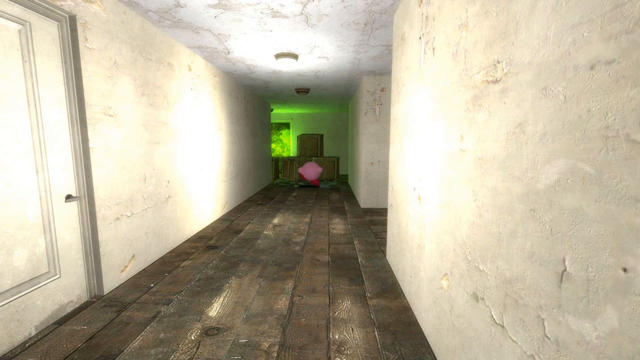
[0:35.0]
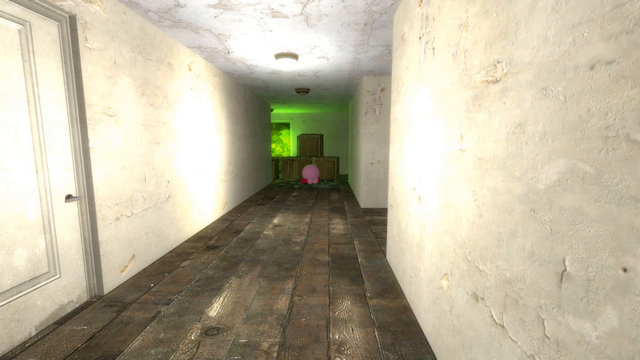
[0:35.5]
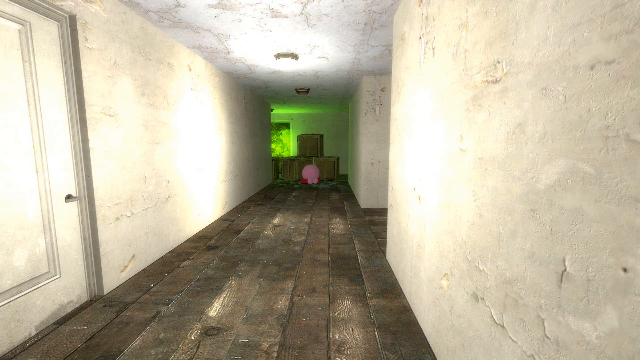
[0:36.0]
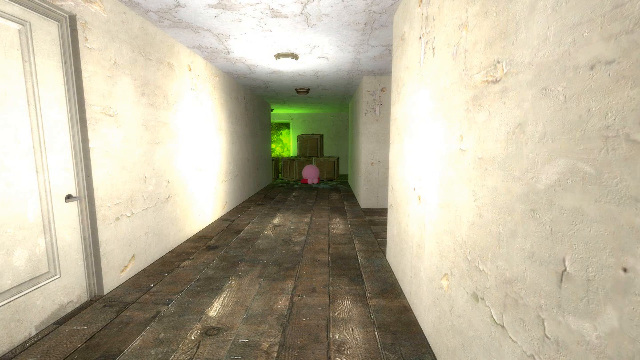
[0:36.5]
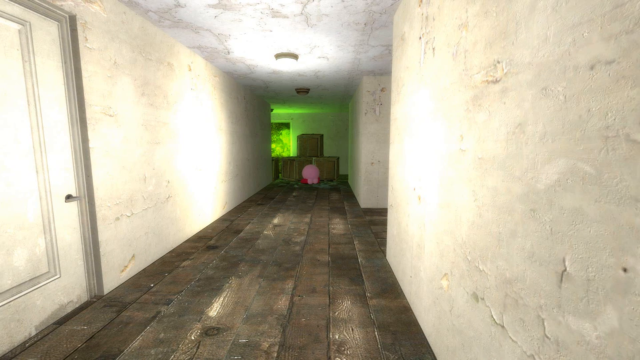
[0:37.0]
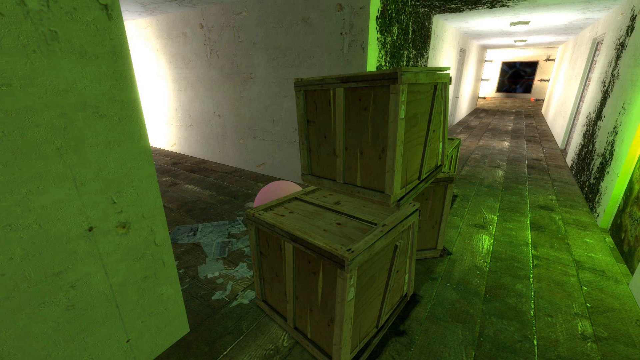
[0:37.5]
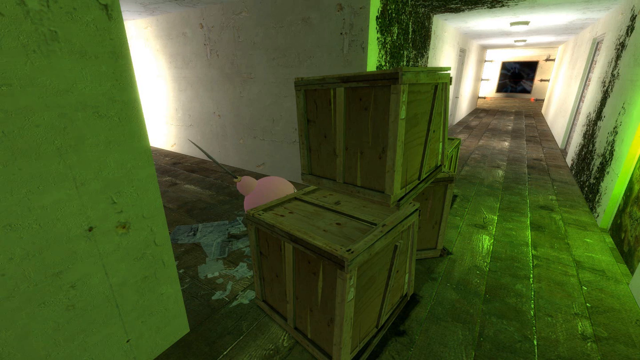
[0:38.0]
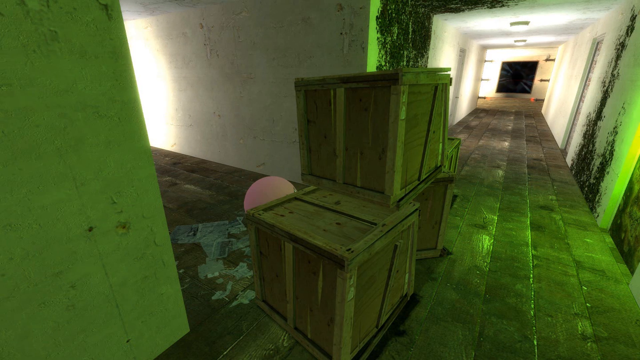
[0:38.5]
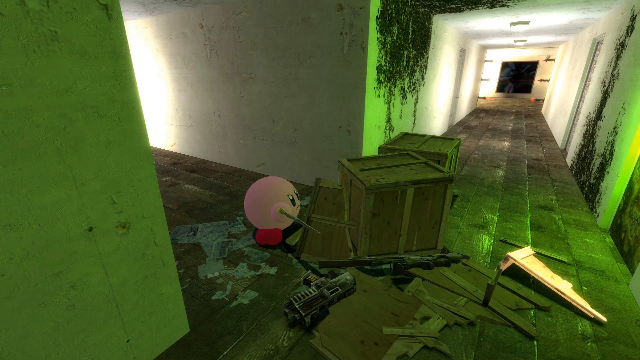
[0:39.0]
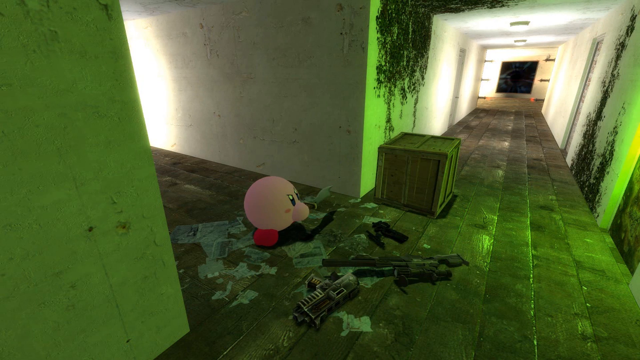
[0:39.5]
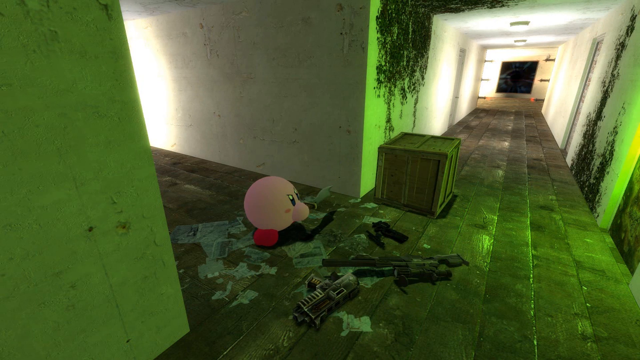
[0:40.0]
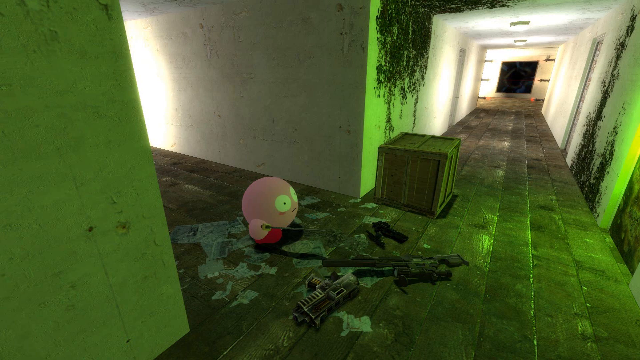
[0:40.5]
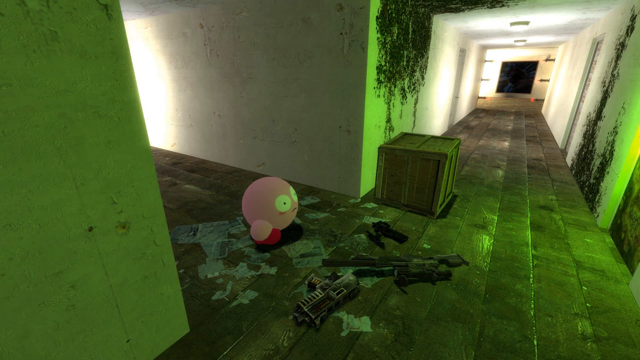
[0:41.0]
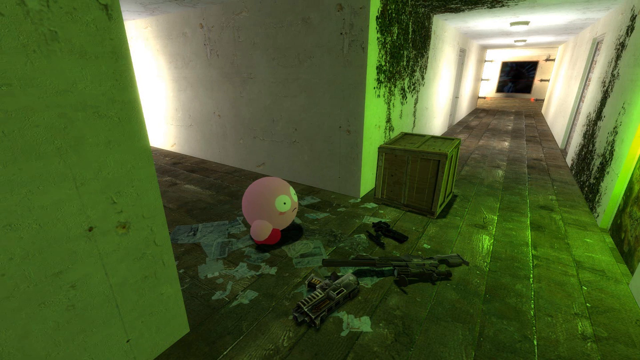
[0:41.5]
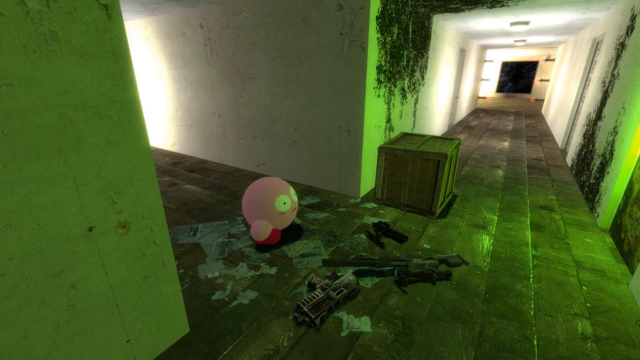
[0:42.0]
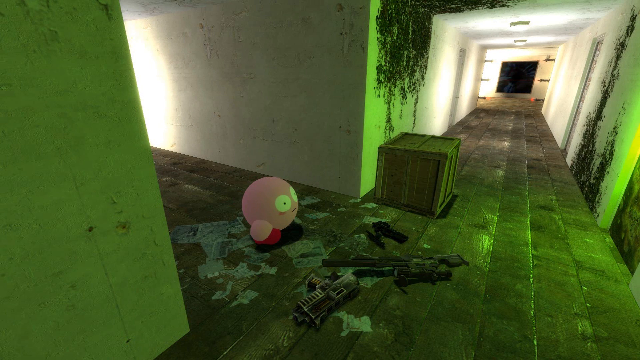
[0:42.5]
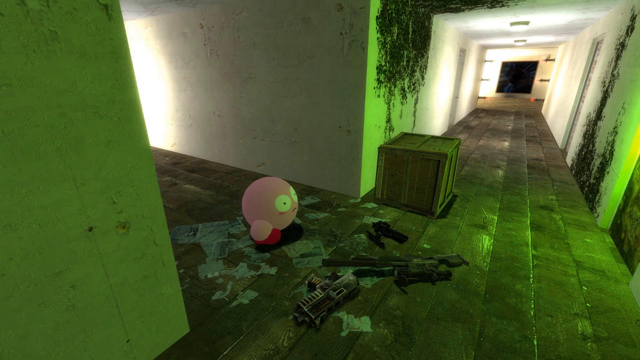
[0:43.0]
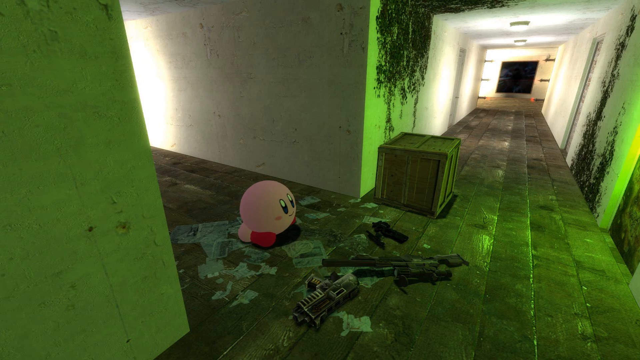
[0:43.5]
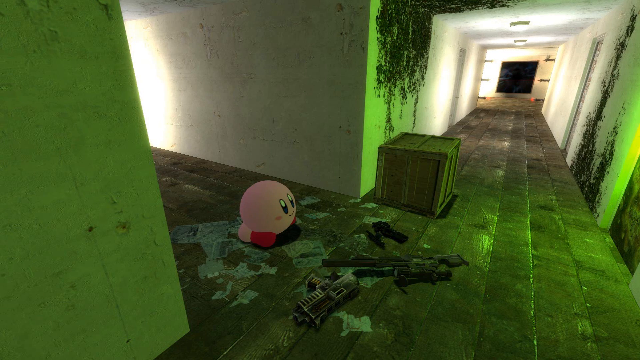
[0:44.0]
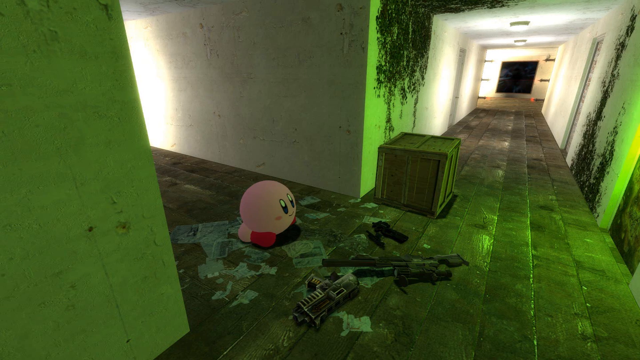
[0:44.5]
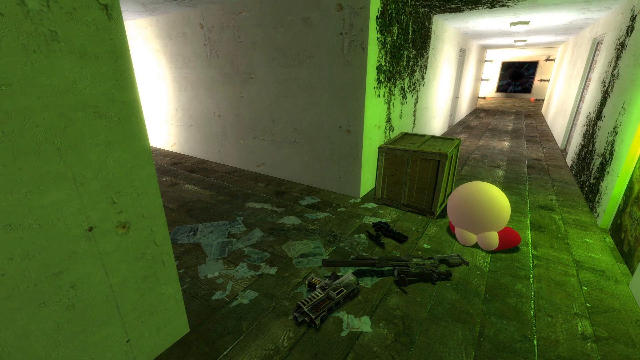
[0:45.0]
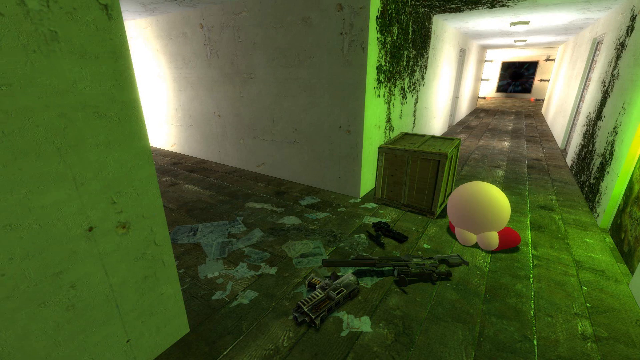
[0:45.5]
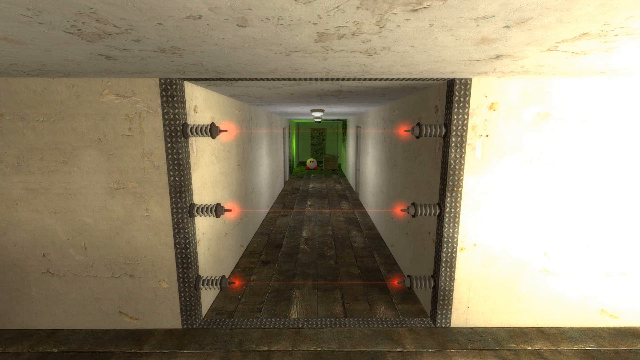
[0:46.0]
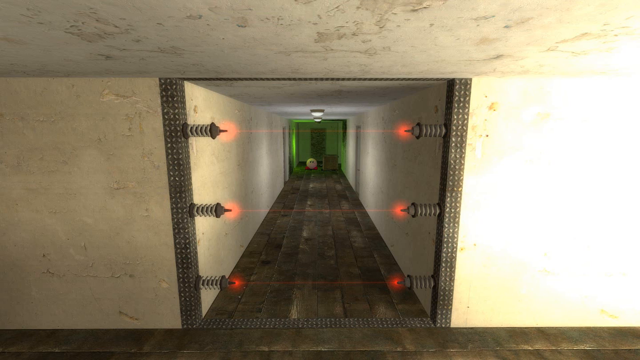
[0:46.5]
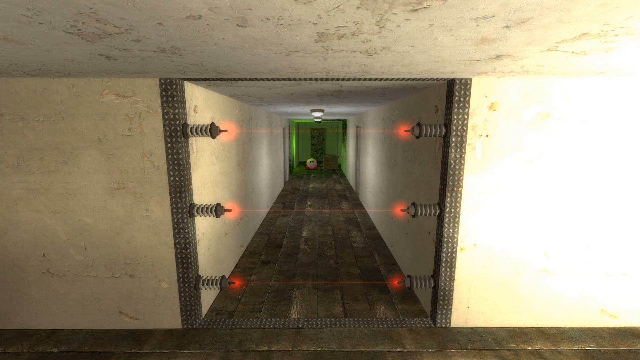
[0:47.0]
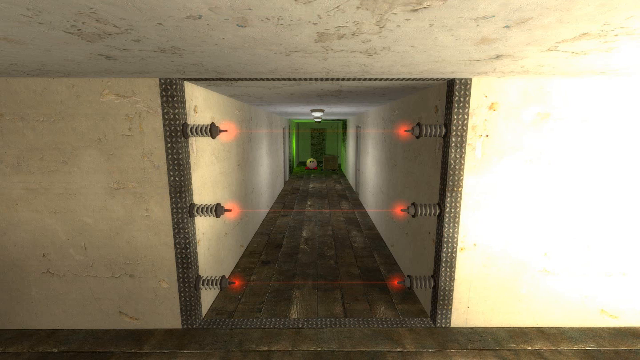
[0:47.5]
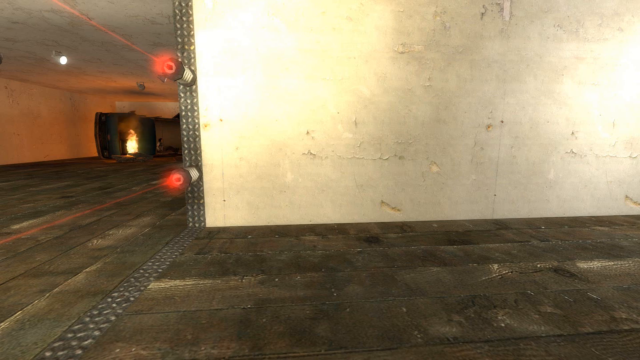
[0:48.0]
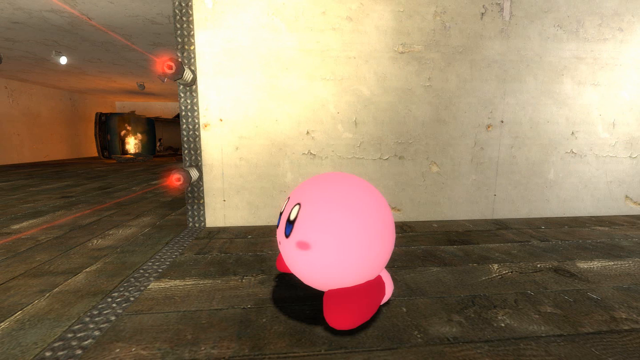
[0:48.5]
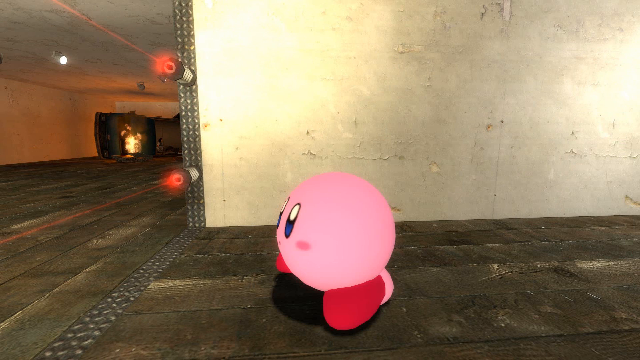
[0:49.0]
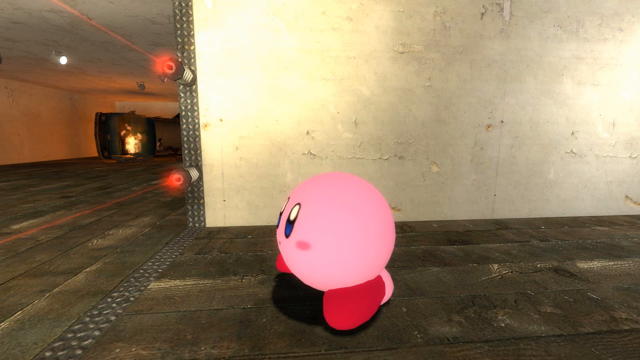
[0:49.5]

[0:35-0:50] The little pink character walks down the hall to the room with the boxes, which are wood. He appears to slash the boxes open, and something comes out of them as he goes a different way from this hallway. A different view of the hallway shows six unidentified pointy things on the walls at the end, black with red, almost like electricity. The pink character's eyes turn white, and there is something like a fire, maybe something burning, from an unclear source. The walls look like they have black mold running down and up them. The character still has red shoes, and his eyes seem to change color.